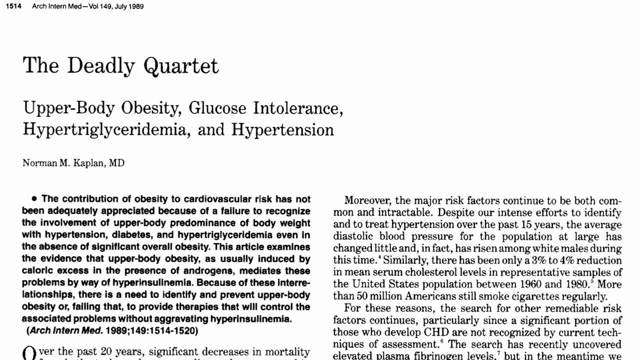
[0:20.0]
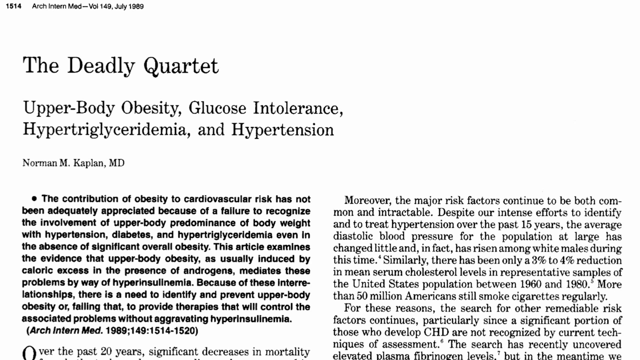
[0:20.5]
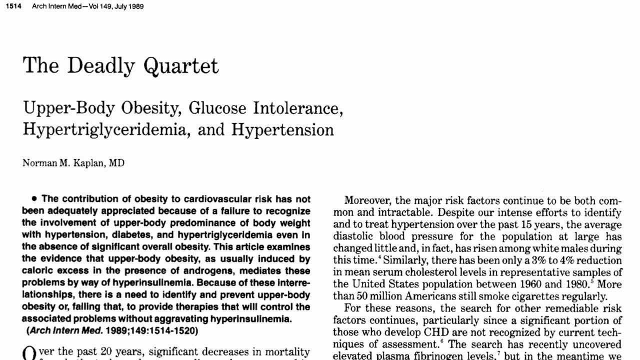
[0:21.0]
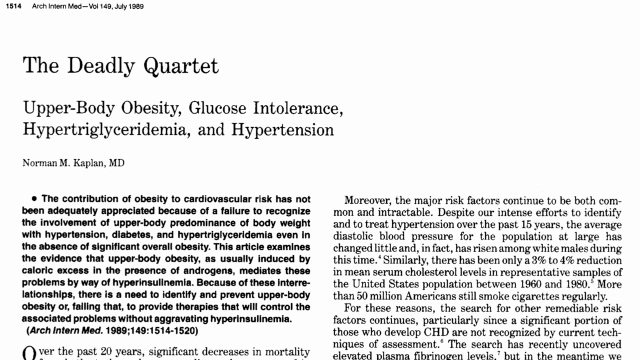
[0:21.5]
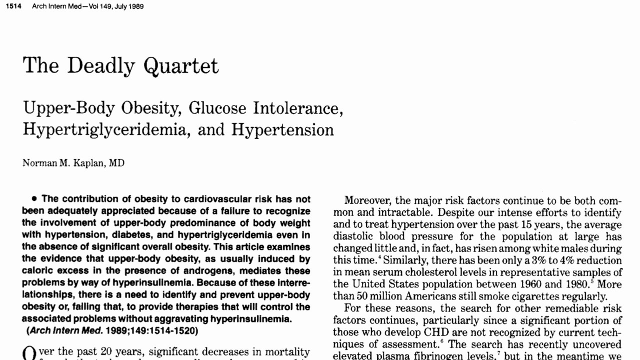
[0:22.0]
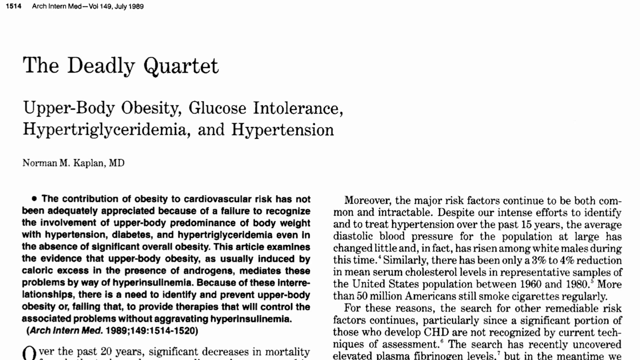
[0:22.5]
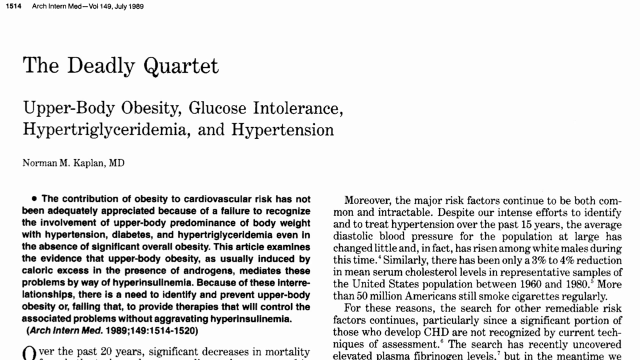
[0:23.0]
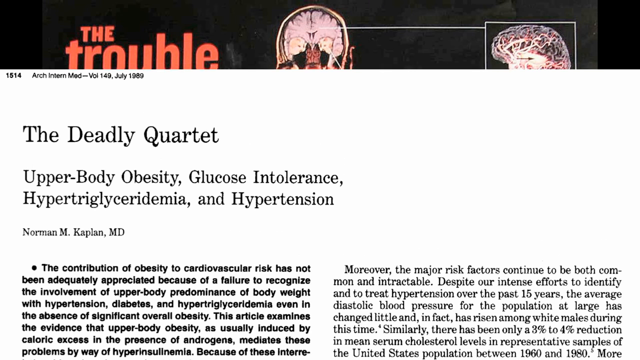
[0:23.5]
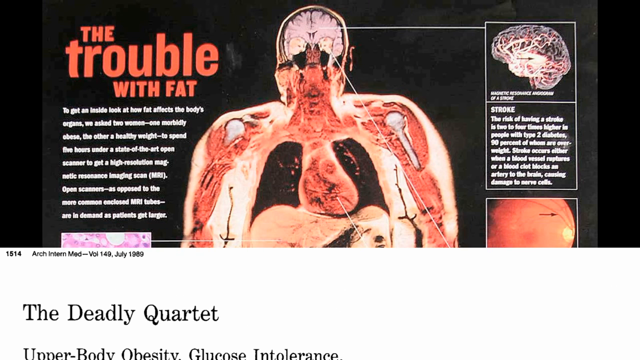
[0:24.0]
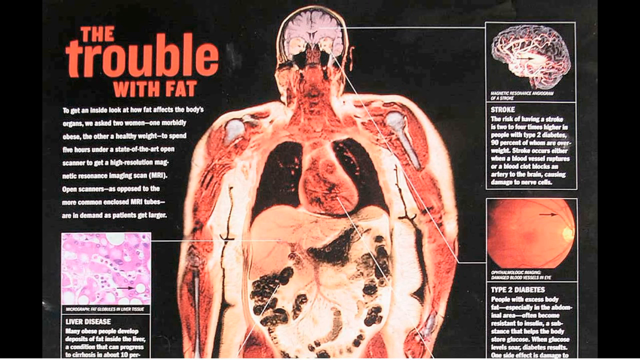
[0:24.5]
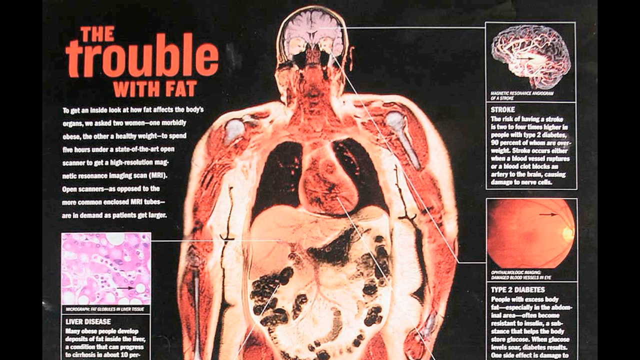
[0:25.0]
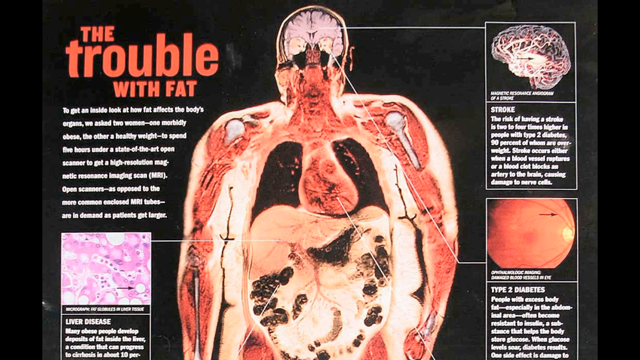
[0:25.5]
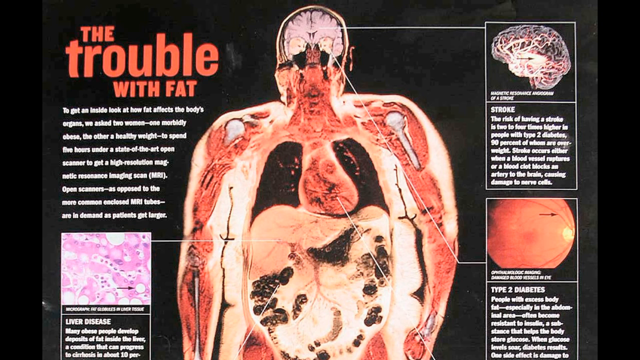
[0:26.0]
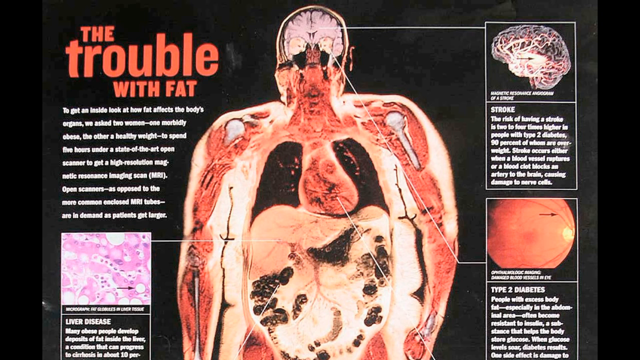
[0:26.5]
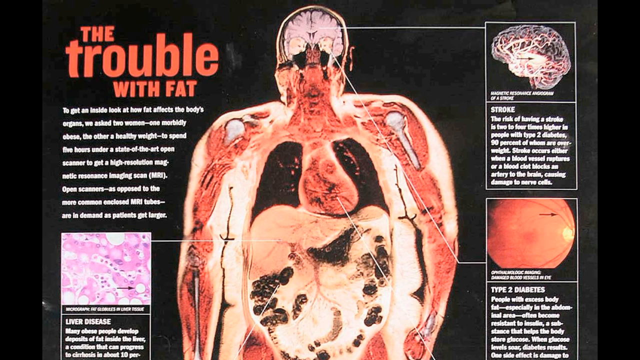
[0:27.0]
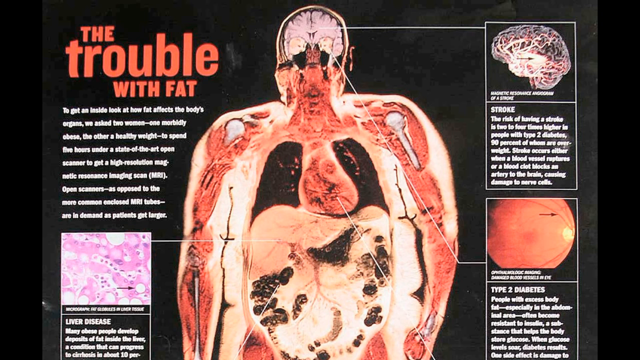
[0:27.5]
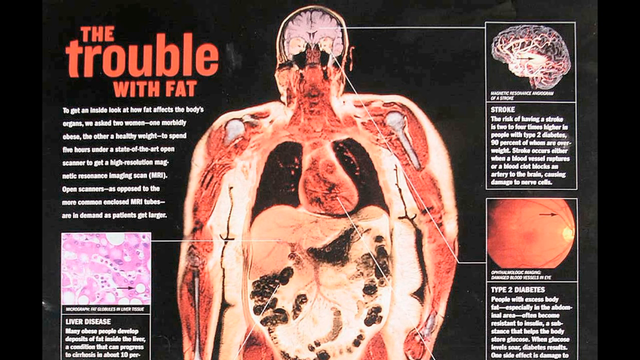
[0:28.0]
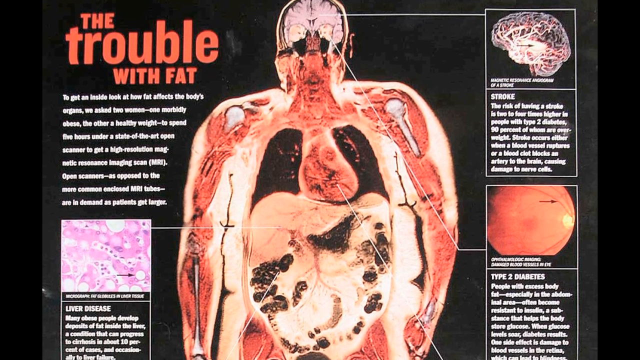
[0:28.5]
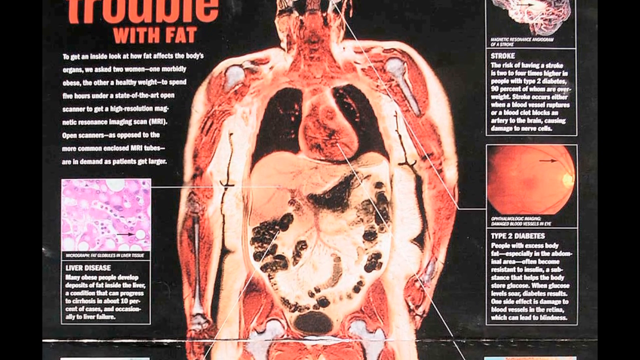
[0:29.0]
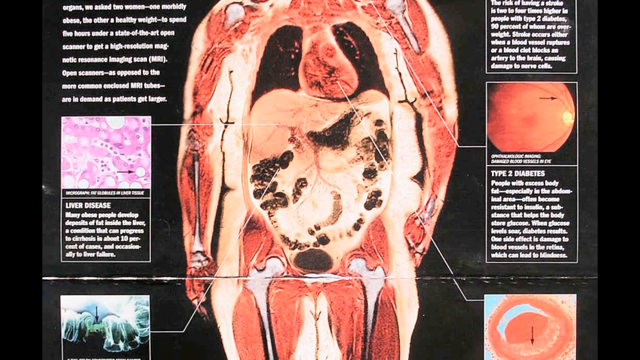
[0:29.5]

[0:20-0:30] The slideshow shows a newspaper article titled "The Deadly Quartet" and remains on it for several seconds. The page then switches by drawing the article down from top to bottom, revealing a slide of what appears to be a magazine article or a textbook page with four illustrations on a black background. In the center is the outlined shape of an overweight person, showing only the inside of his organs, his brain and some of his muscle. The illustrated man looks bloblike, with areas of dark pink or red in the face, arms and heart area, and below that a fatty stomach with dark black areas throughout. At the left side of the page, to the right of the illustrated man, is a title in the upper left corner in red font reading "The Trouble with Fat," with white descriptive text beneath it. At the bottom left is a close-up square showing a pink and white section of cells or fat that points toward the center of the man's body. To the right of the central figure are two more illustrations enclosed in boxes with thin white lines: the top one, an illustration of the brain, points to the top of the man's head and has descriptive white text beneath it; below it, an illustration of what looks like a round orange ball points to an area of the man's forehead, with more white text underneath. The slideshow remains on this image for several seconds, then the camera begins to pan down to the bottom of the page, showing the lower half of the man's body. His torso is shown with a small illustration on each side: on the left, what looks like a microscopic section of cells, and on the right, a light orange ball-like image.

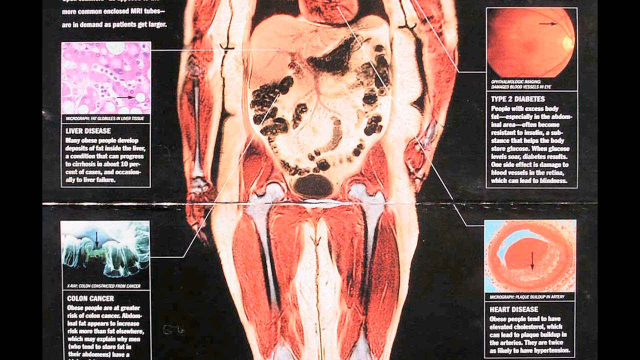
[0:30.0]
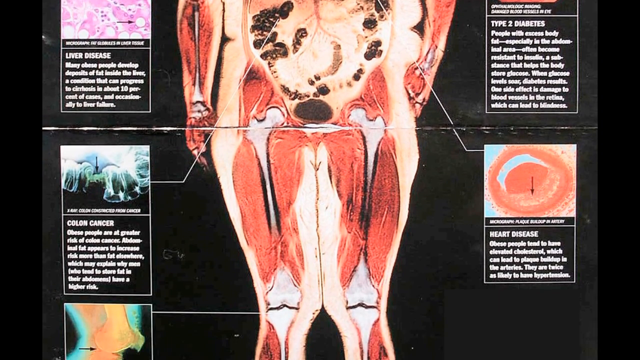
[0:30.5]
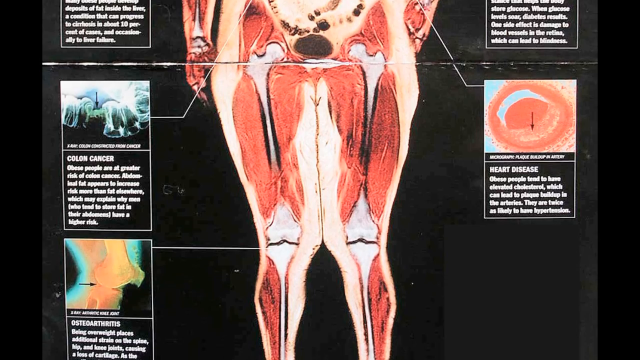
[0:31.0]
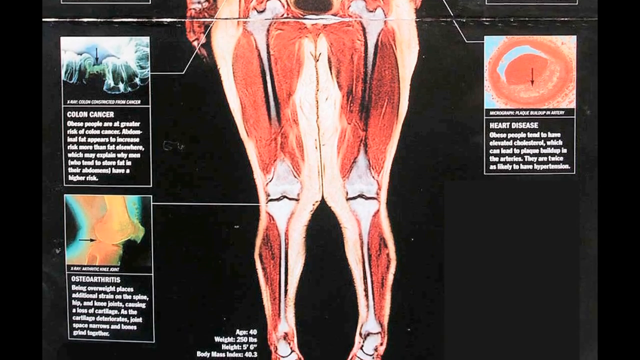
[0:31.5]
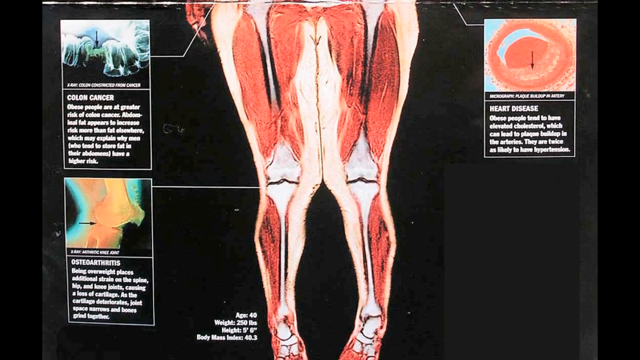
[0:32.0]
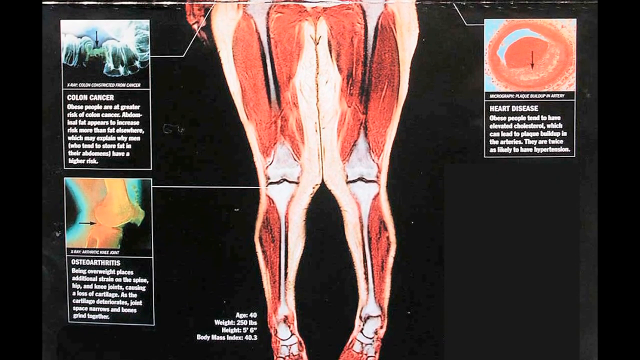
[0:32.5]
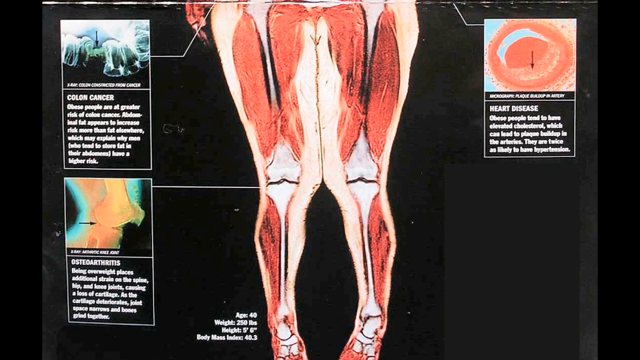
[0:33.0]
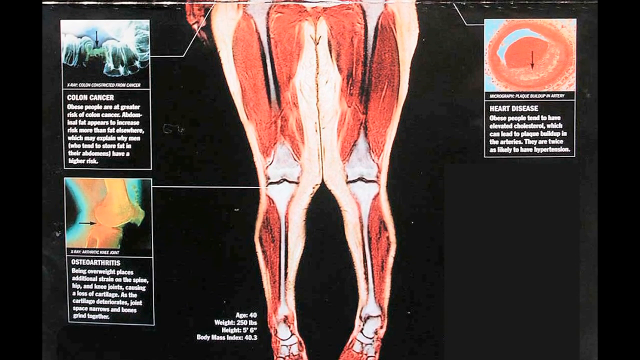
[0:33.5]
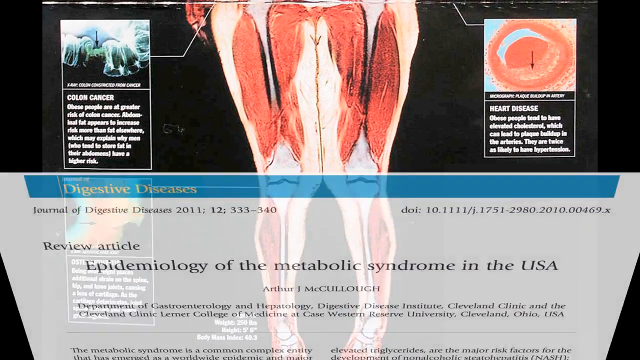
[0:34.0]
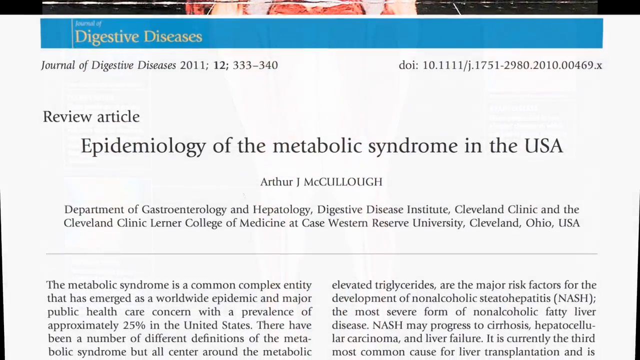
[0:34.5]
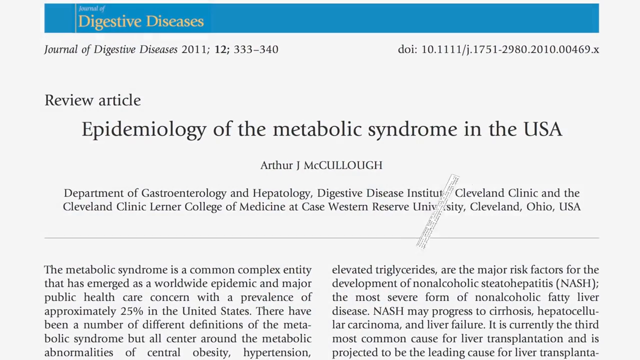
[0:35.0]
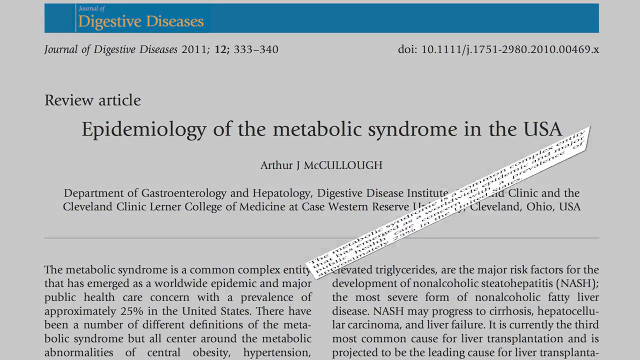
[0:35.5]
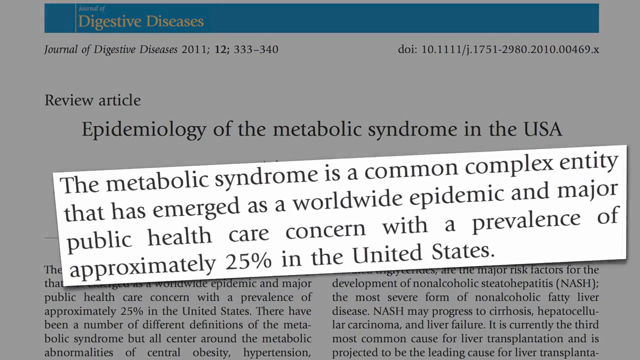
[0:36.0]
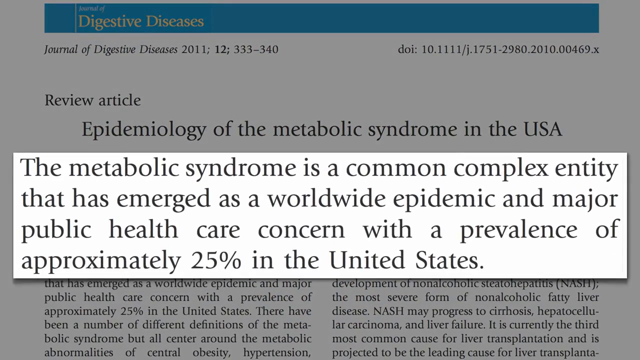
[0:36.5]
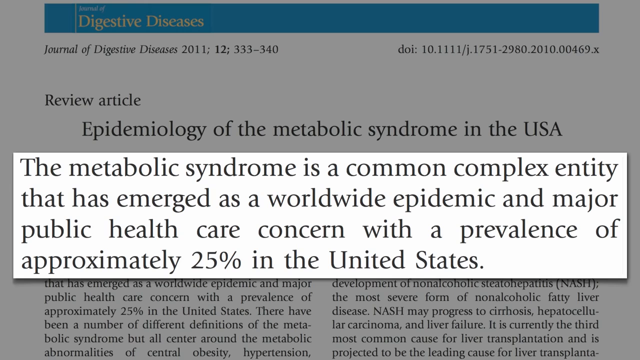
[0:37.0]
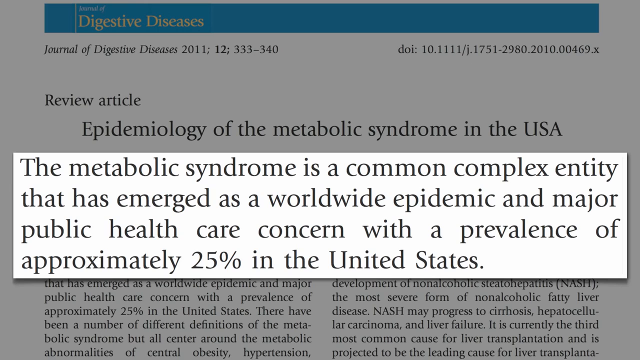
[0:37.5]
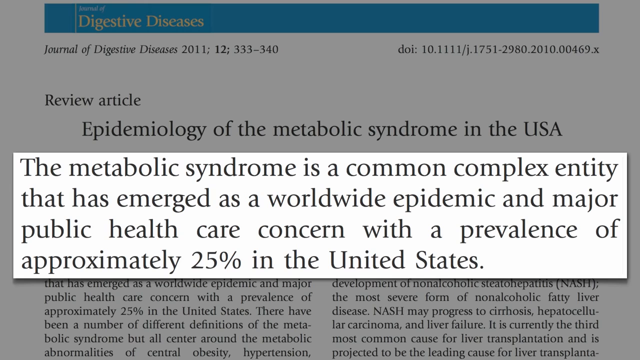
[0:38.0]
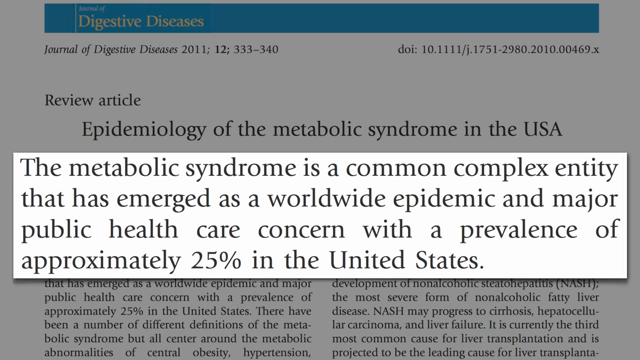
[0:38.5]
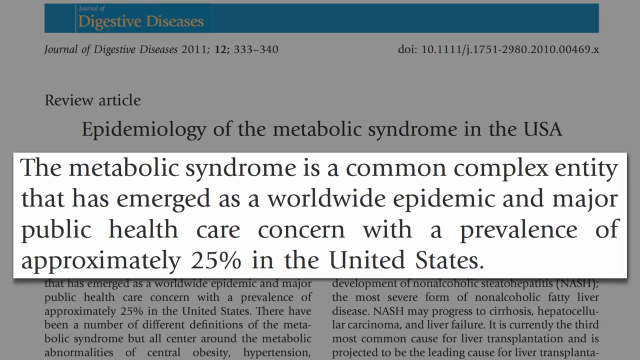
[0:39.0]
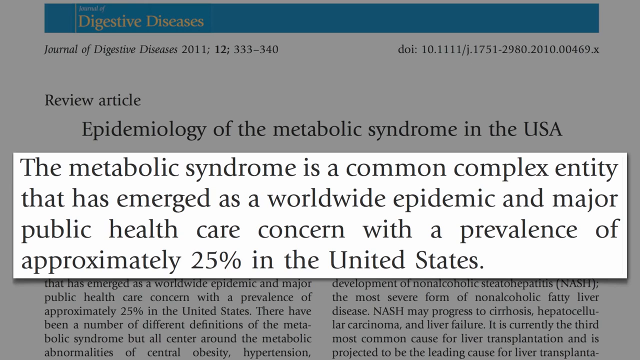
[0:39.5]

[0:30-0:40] The slideshow stays on what now looks like a textbook illustration turned on its side, so that the left page would be the top and the right page the bottom, like a centerfold illustration of the human body. The camera pans down to settle at the bottom of the page and the illustration. The outline of the body in the center of the page makes it clear that the person has a lot of fat storage. As the camera pans down, insets with descriptive sections and microscopic illustrations appear on the left and one on the right, in pastel colors: the upper box on the left reads "colon cancer," the one below it shows a knee joint with an arrow and reads "osteoarthritis," and the box on the right reads "heart disease." The muscle mass inside the body is shown in a darkish pink color. The slideshow remains on this image for several seconds, then a new image rises smoothly from bottom to top: what looks like a medical article, with a light blue banner at the very top bearing yellow text that reads "Digestive Diseases." The article's title reads "Epidemiology of the Metabolic Syndrome in the USA," with the name Arthur McCulloch. Suddenly a highlighted section of text moves forward in a rectangular box with a white background and black text, reading "the metabolic syndrome is a common complex entity that has emerged as a worldwide epidemic and major public health care concern with a prevalence of approximately 25% in the United States." The text box settles in the center of the image.